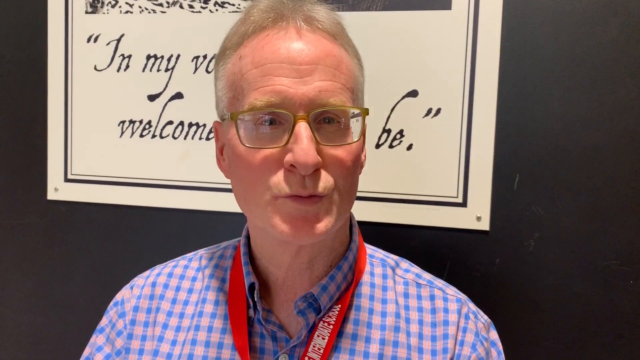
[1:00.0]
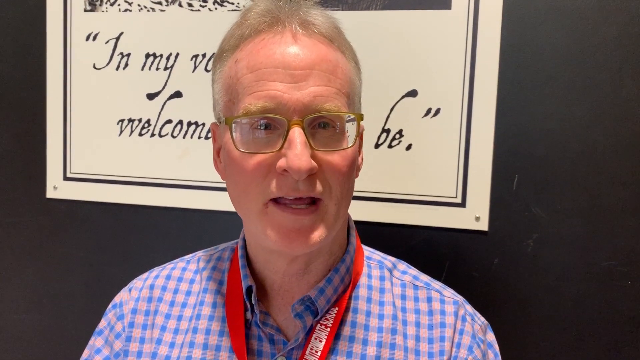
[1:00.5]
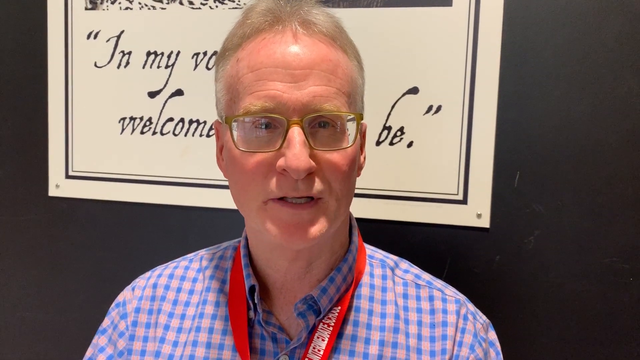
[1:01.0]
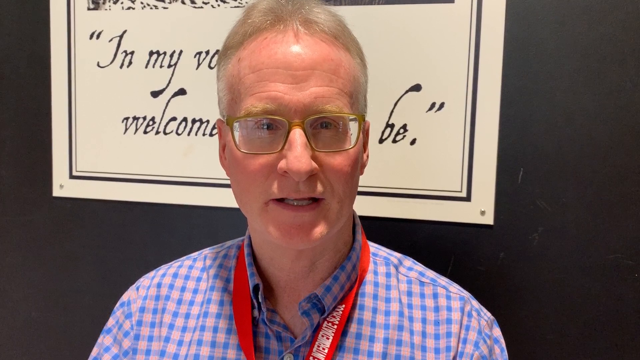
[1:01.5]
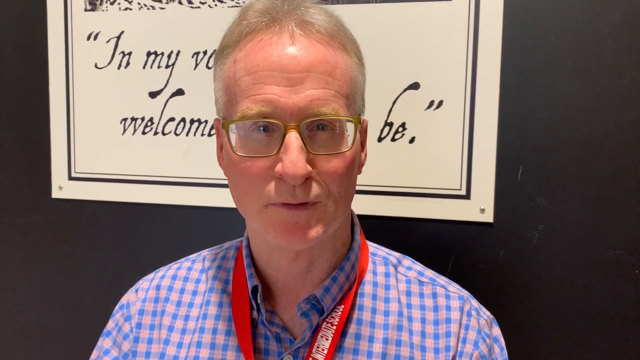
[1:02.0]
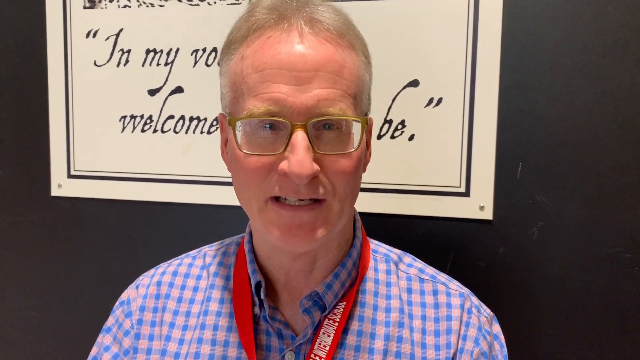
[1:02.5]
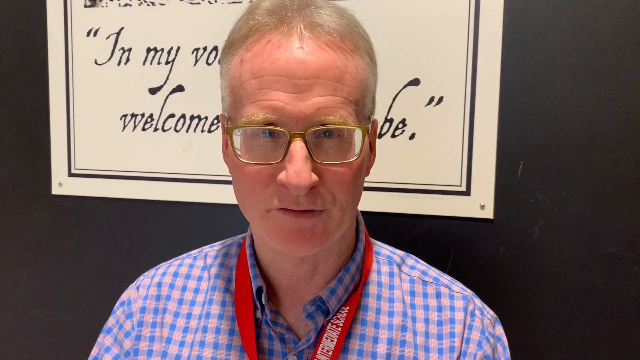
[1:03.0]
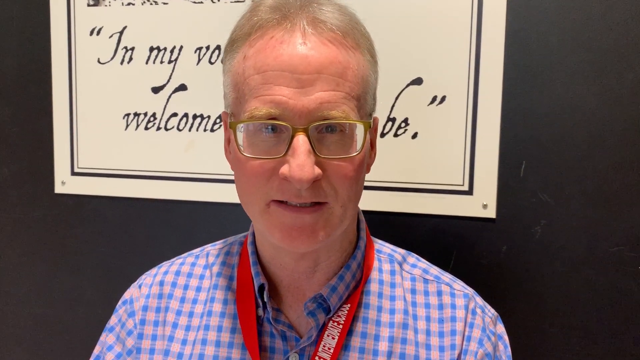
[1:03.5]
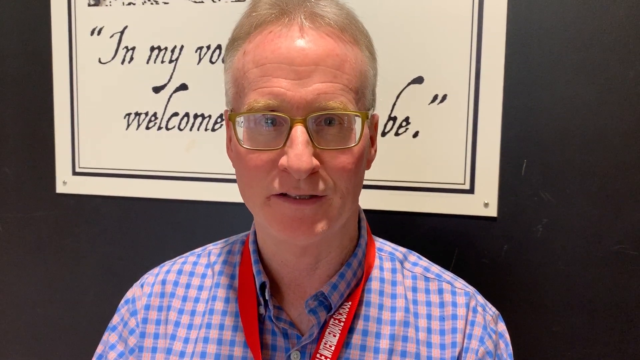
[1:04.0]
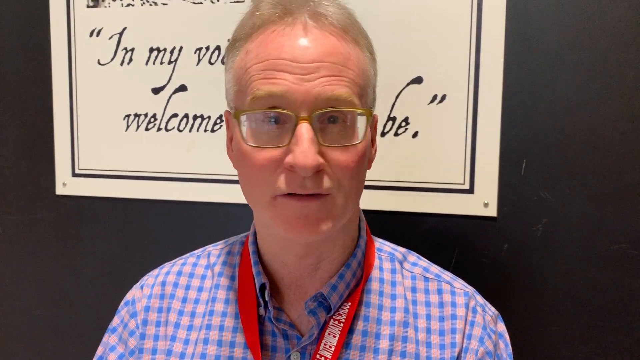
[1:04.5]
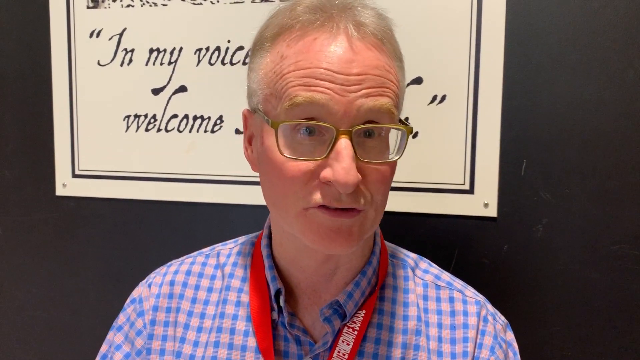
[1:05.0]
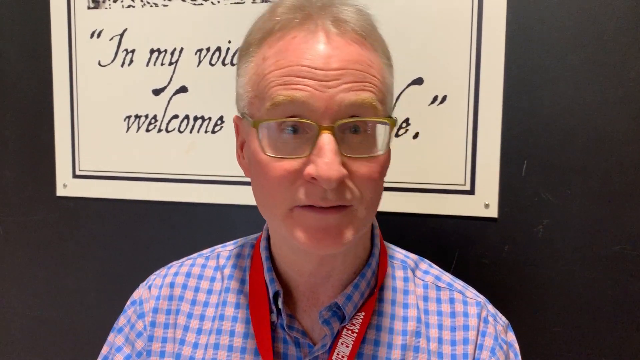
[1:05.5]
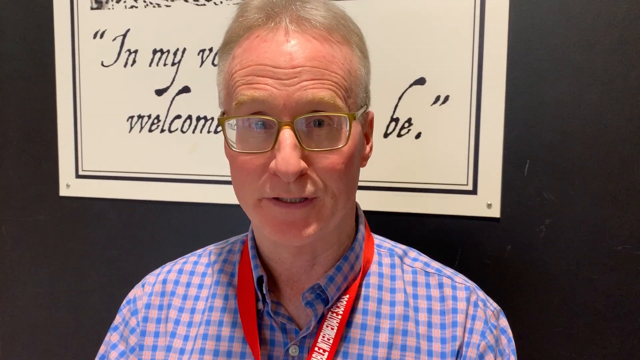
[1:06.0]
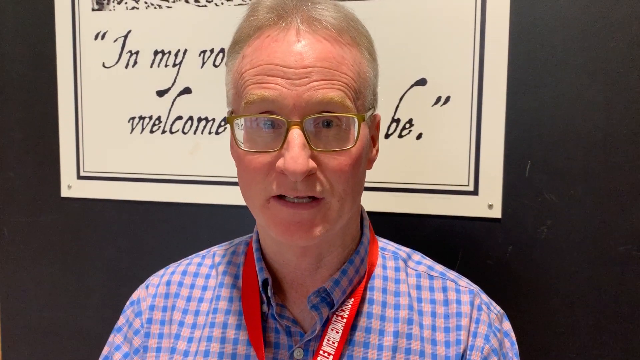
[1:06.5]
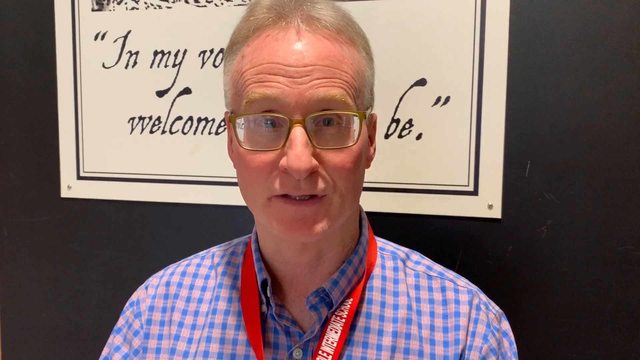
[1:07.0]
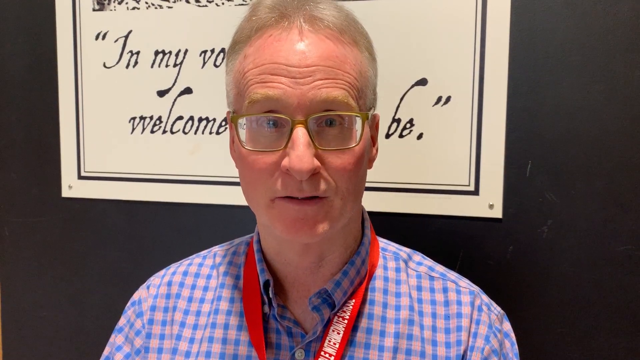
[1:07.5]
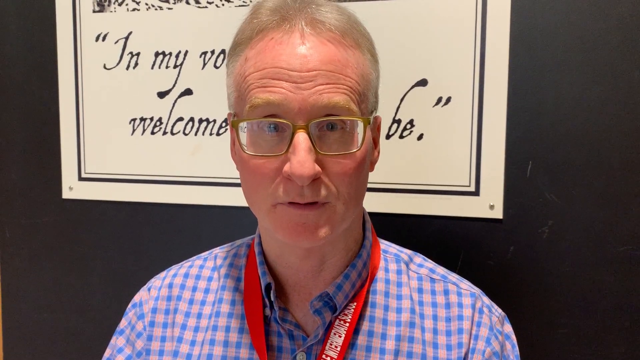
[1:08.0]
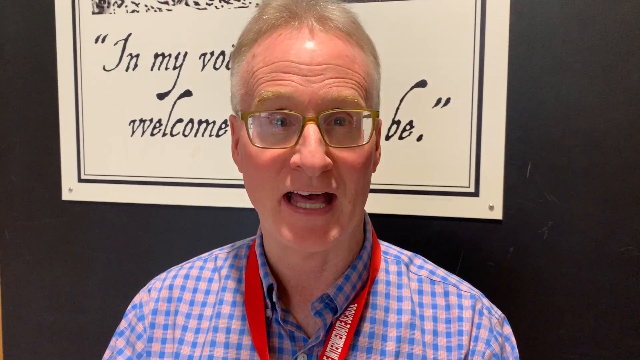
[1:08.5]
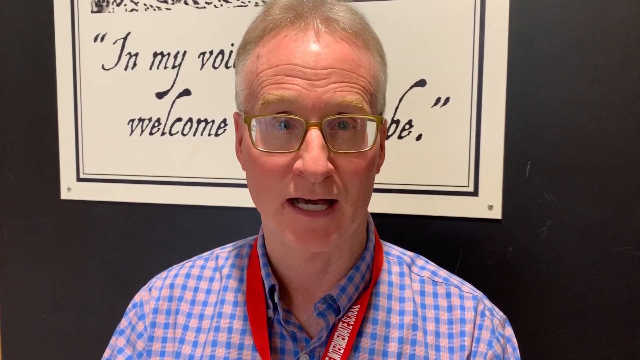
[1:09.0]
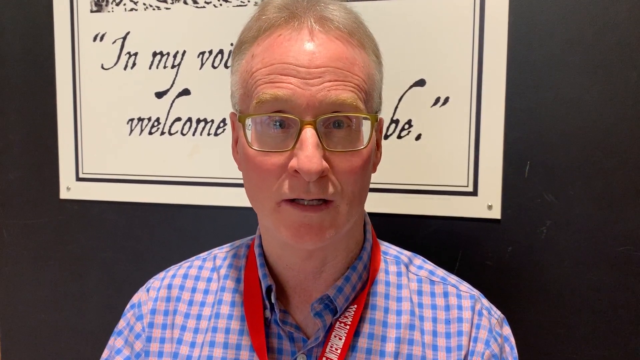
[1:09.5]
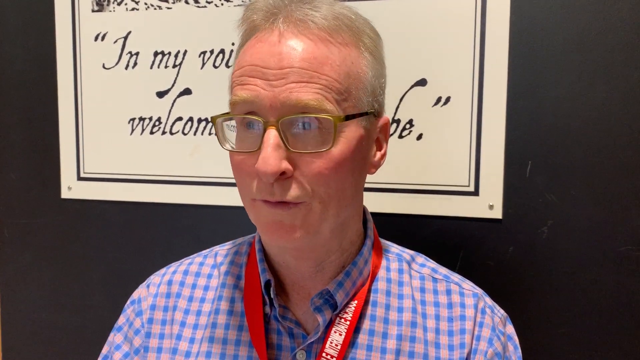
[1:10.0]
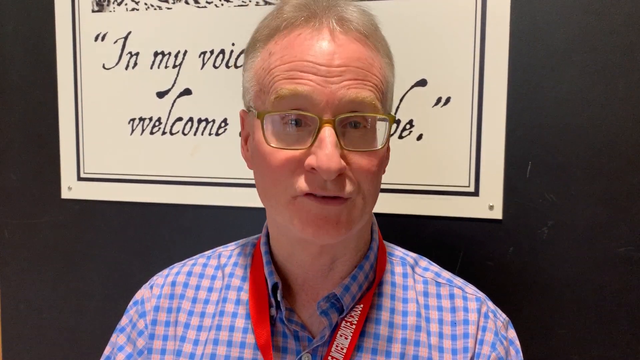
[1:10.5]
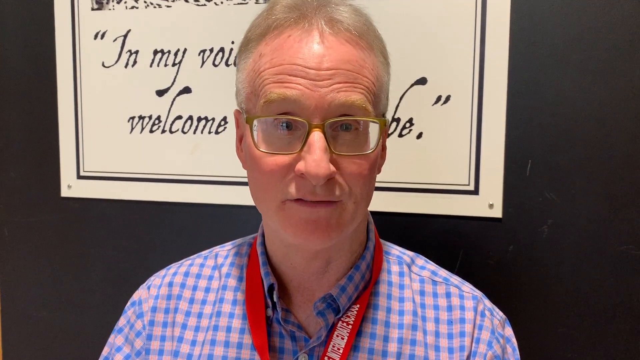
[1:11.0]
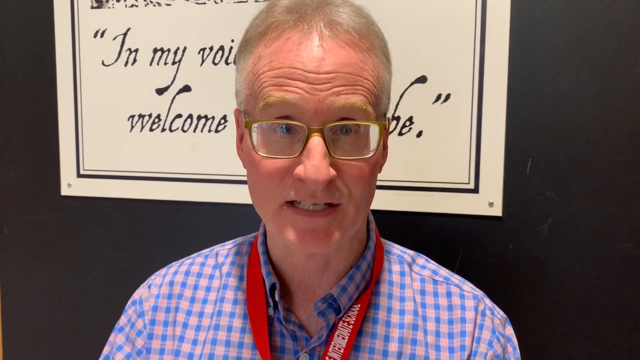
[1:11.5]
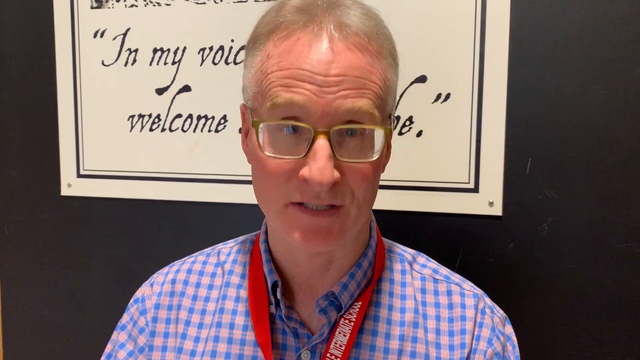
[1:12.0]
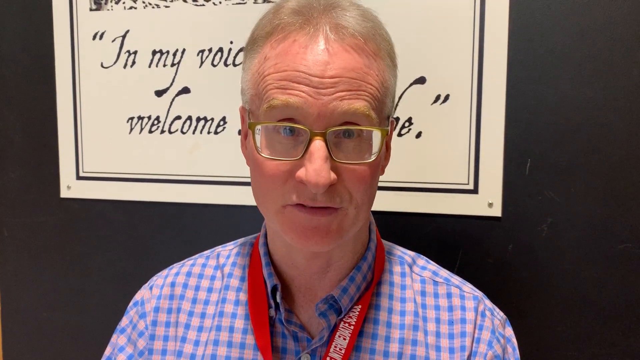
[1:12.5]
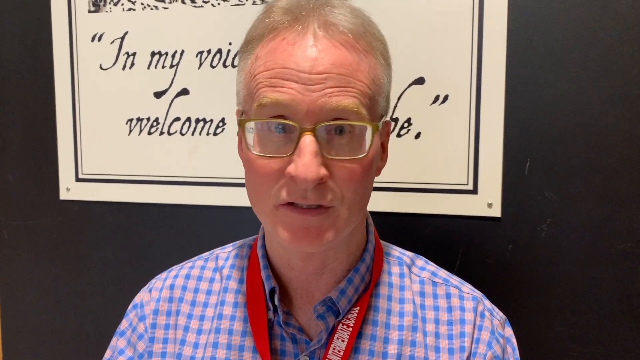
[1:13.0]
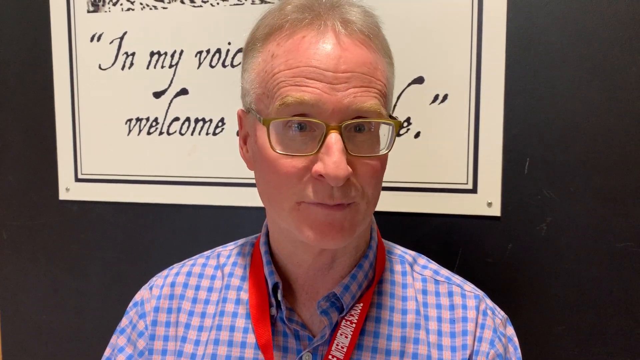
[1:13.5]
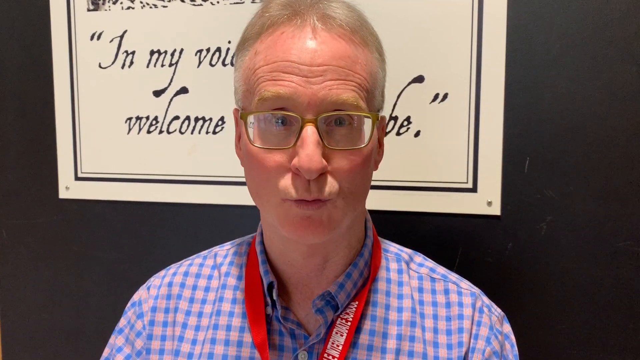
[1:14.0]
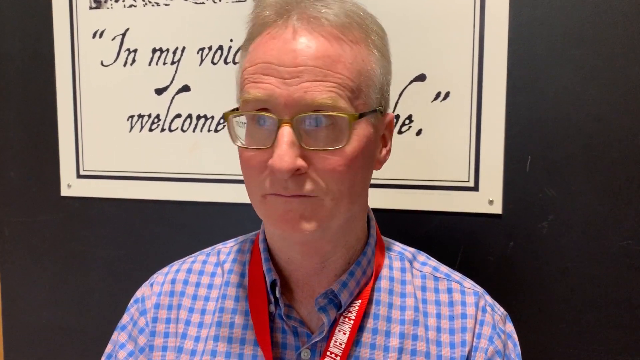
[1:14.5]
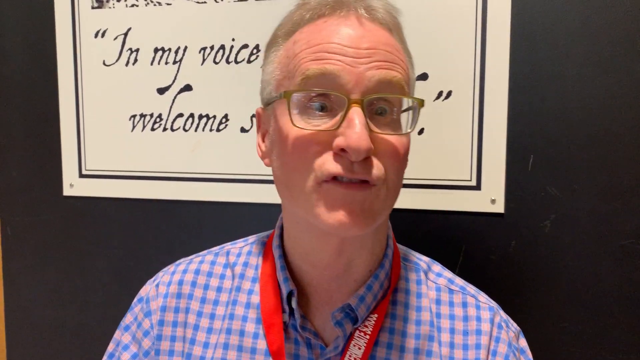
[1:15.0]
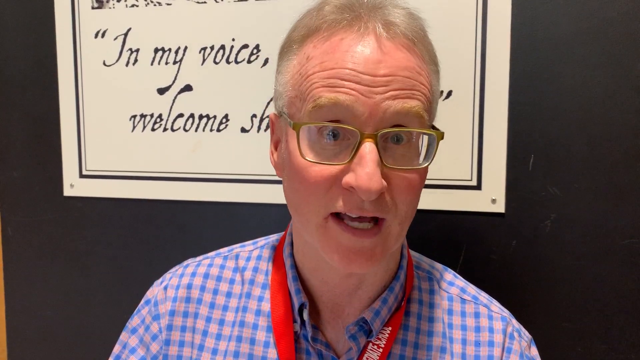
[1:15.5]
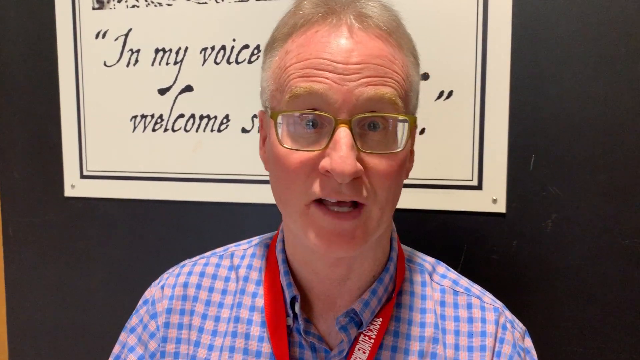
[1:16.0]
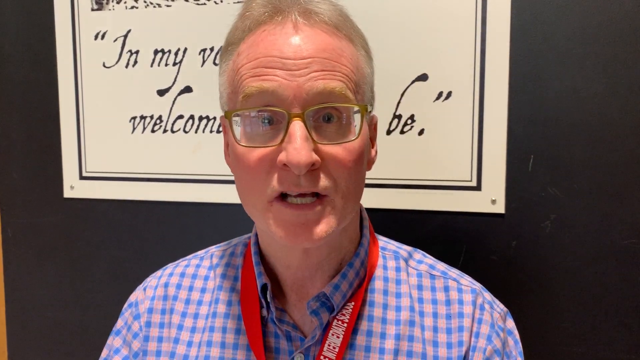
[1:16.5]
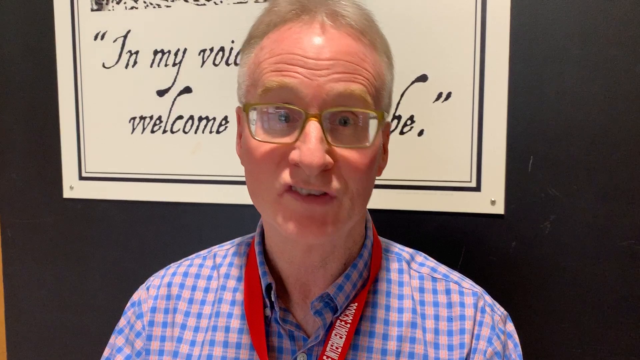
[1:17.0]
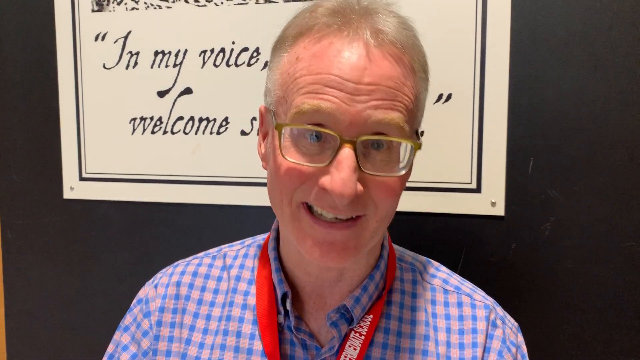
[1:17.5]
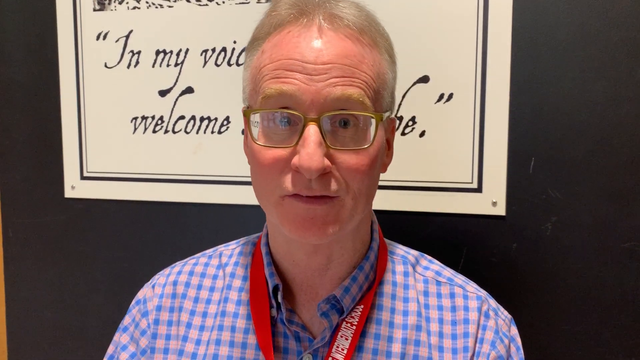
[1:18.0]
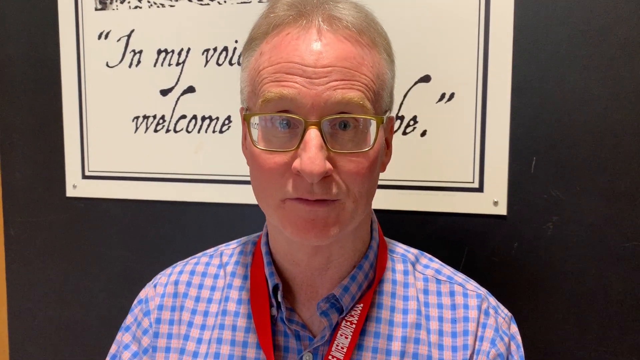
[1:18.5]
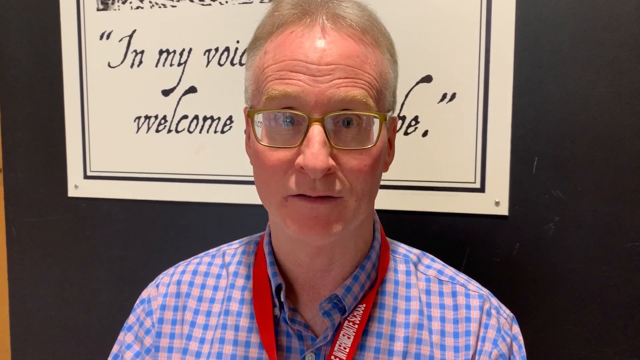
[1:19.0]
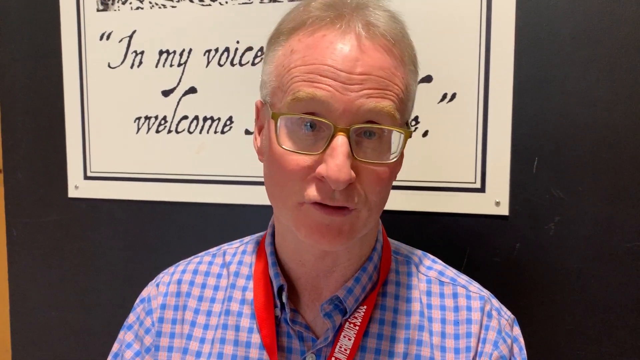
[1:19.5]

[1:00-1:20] In an auditorium, the man talks to some students, Barnstable High seniors. Seen up close, his shirt is pink and blue, sort of in squares, kind of like a madras plaid. He is in front of the sign that cannot be read in full: it says "in my voice, welcome", something, and "be", with his head blocking some of the words. The lettering is in italics and looks old, like a typeset font from around the 1820s, and there appears to be an etching above it.